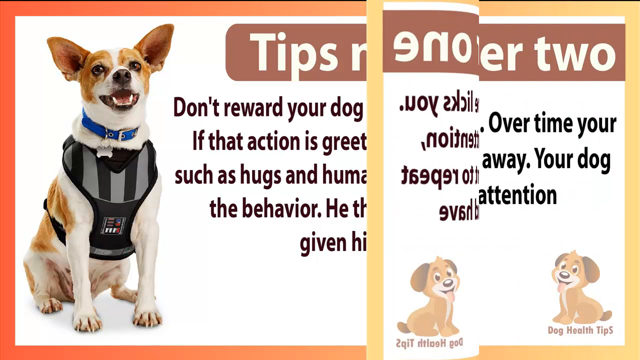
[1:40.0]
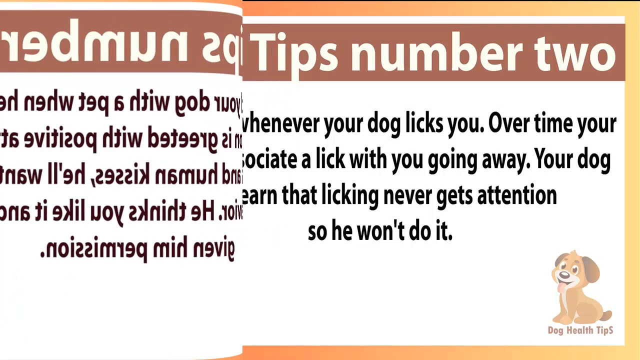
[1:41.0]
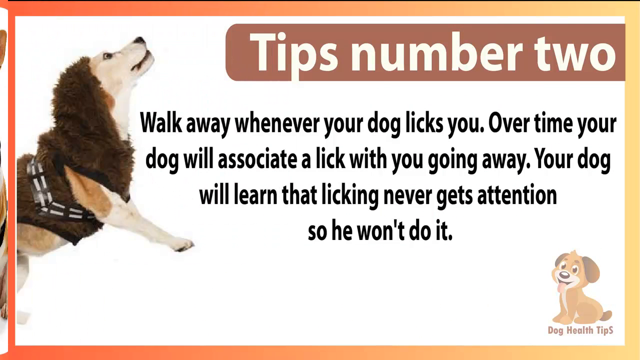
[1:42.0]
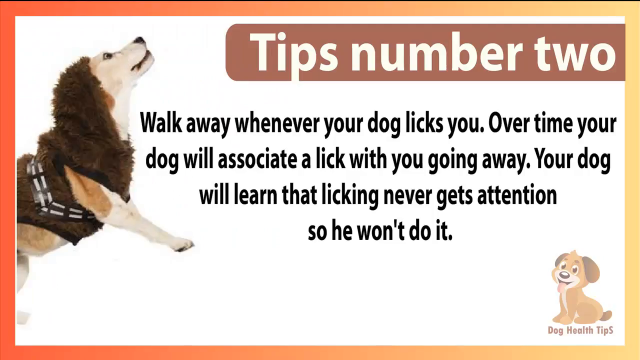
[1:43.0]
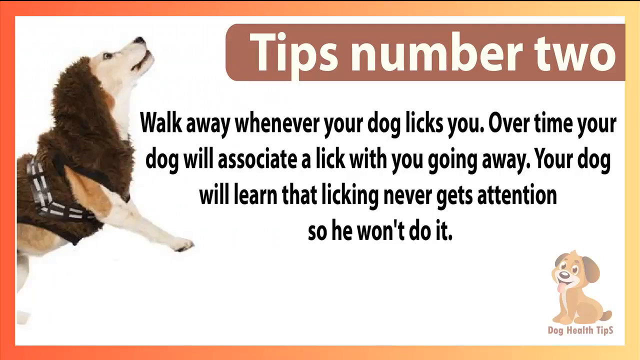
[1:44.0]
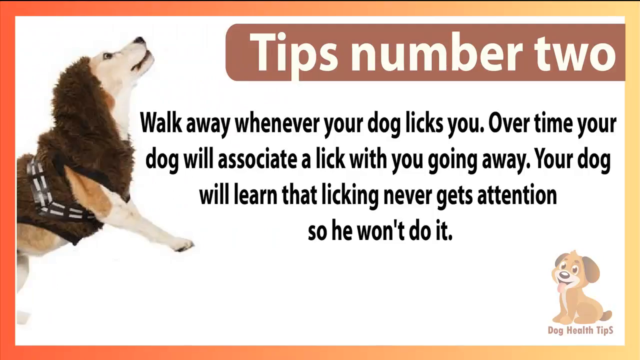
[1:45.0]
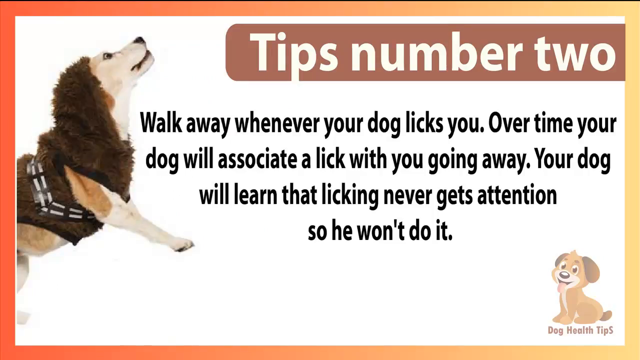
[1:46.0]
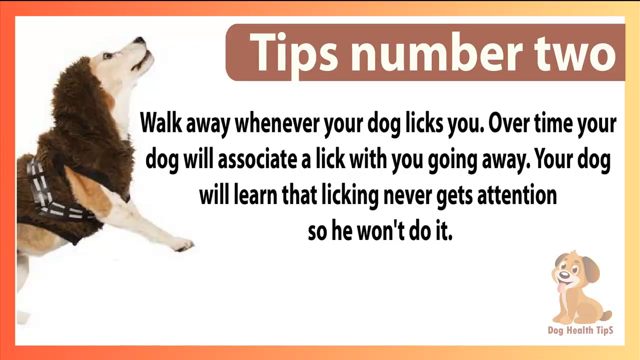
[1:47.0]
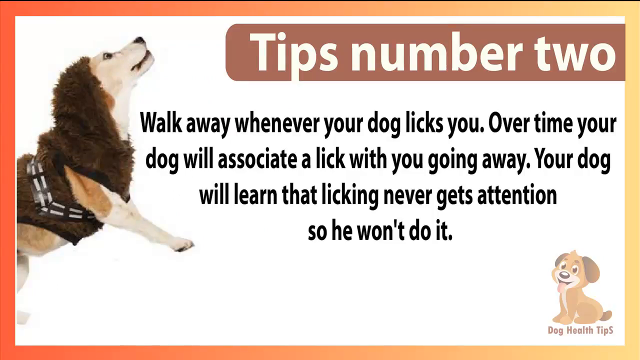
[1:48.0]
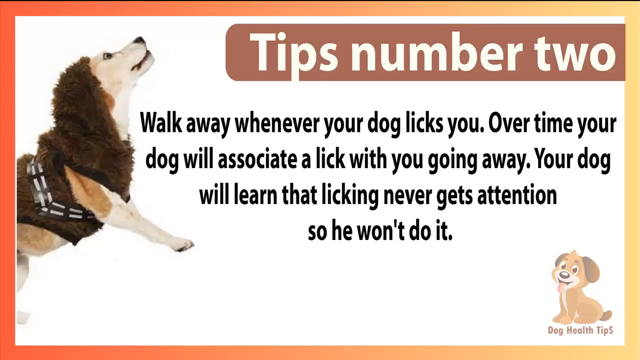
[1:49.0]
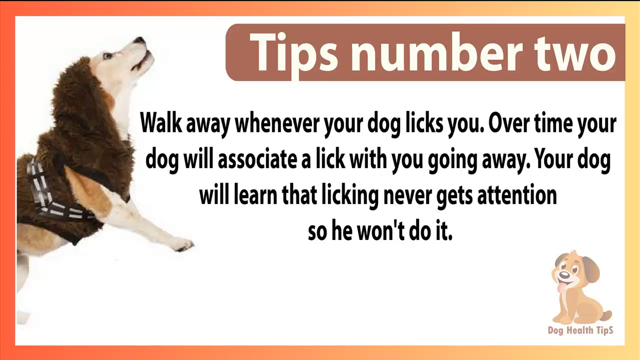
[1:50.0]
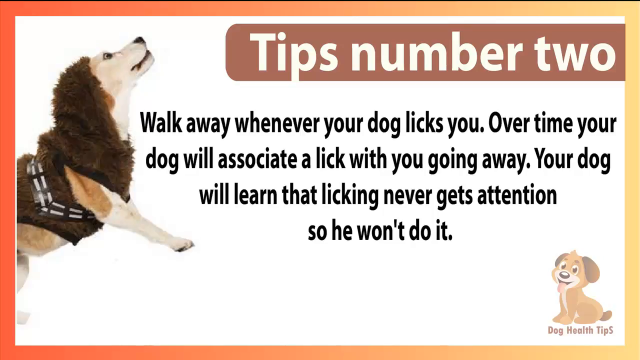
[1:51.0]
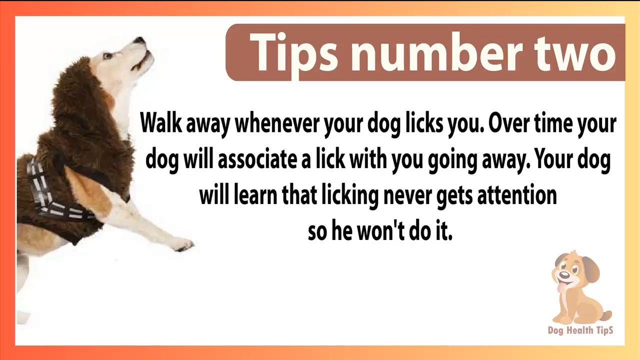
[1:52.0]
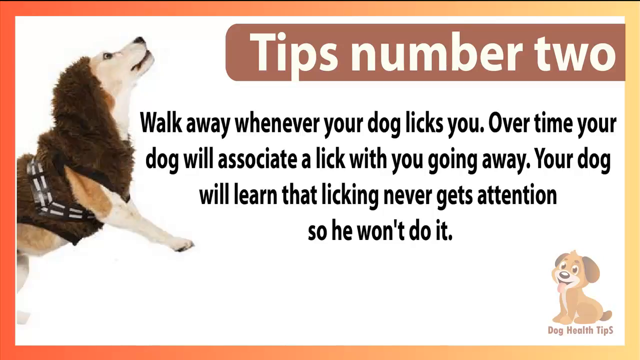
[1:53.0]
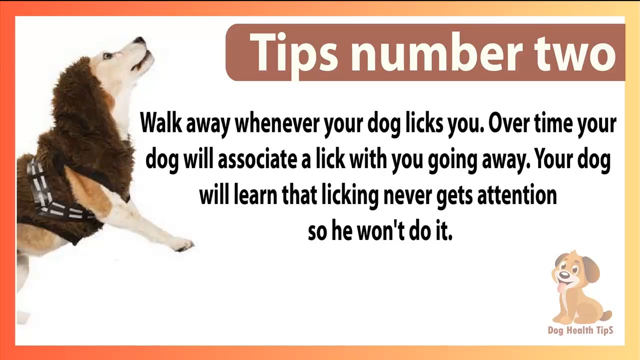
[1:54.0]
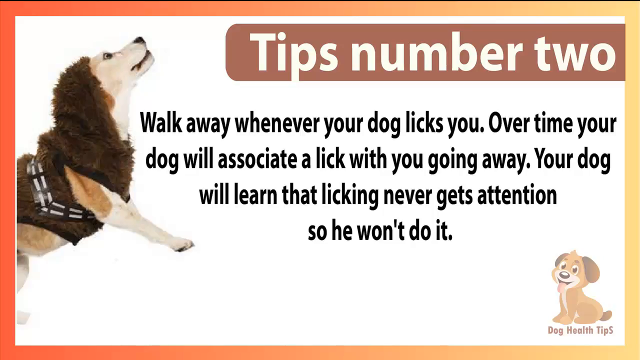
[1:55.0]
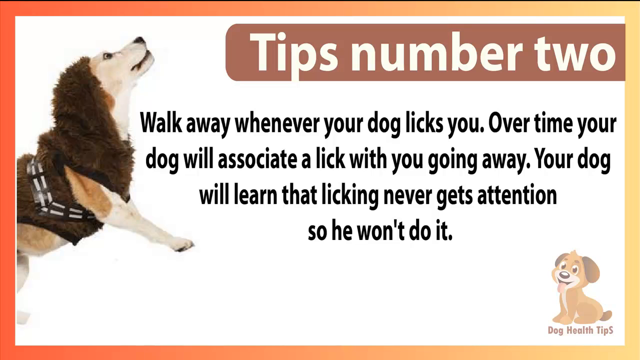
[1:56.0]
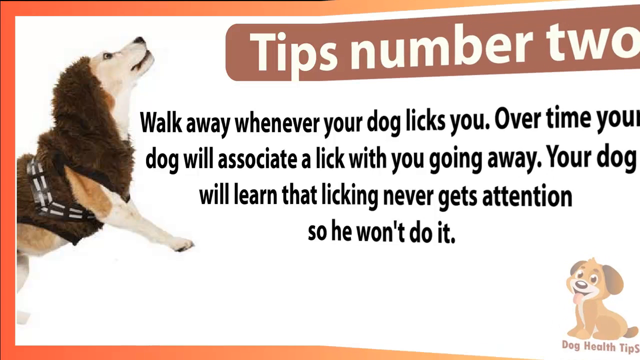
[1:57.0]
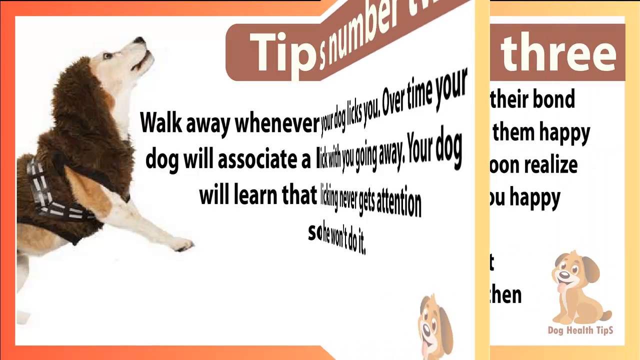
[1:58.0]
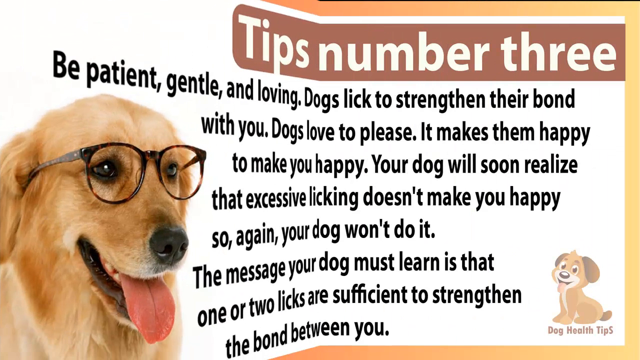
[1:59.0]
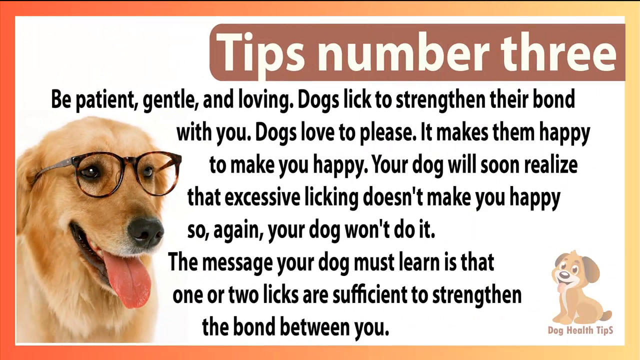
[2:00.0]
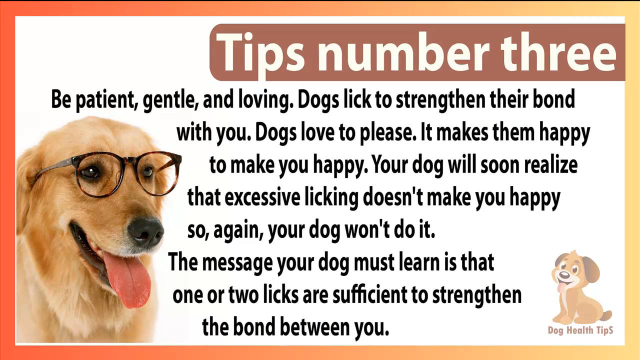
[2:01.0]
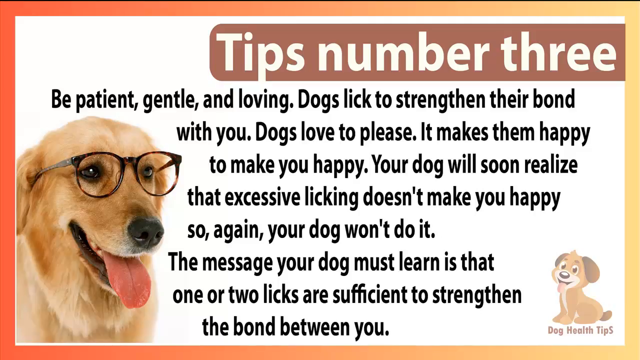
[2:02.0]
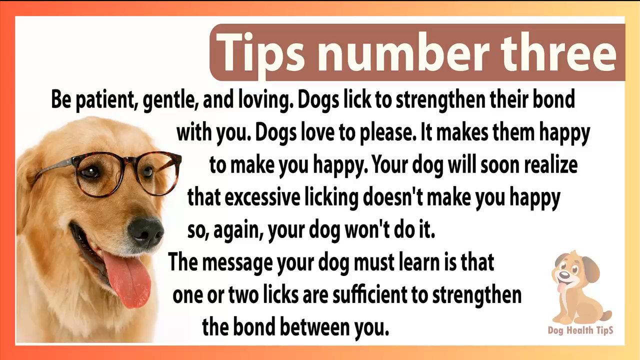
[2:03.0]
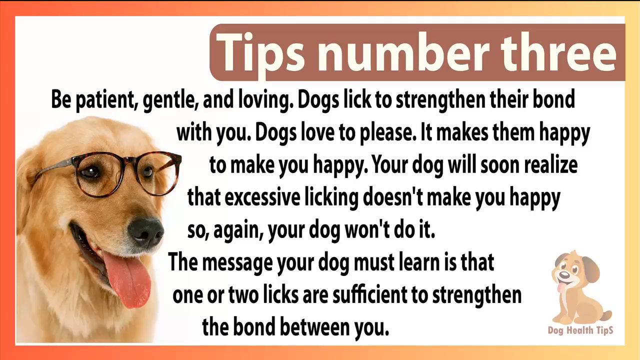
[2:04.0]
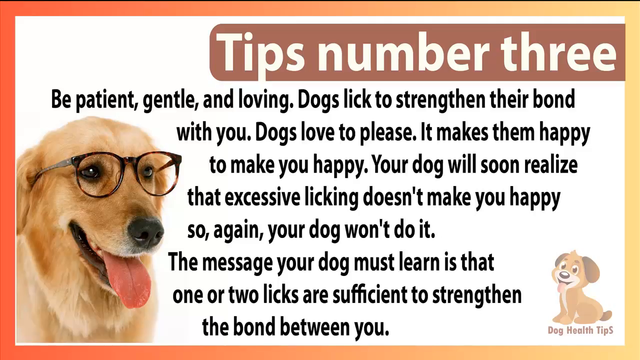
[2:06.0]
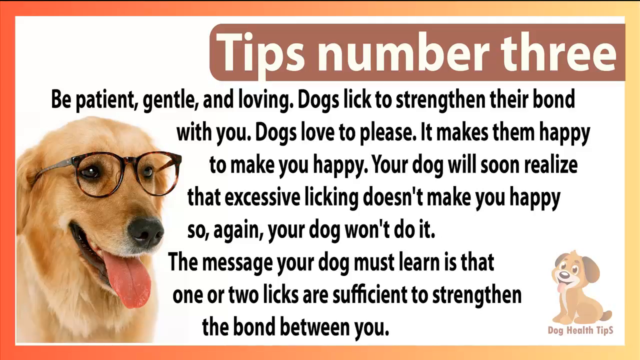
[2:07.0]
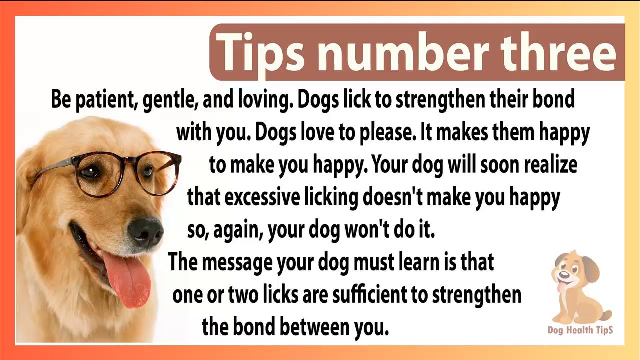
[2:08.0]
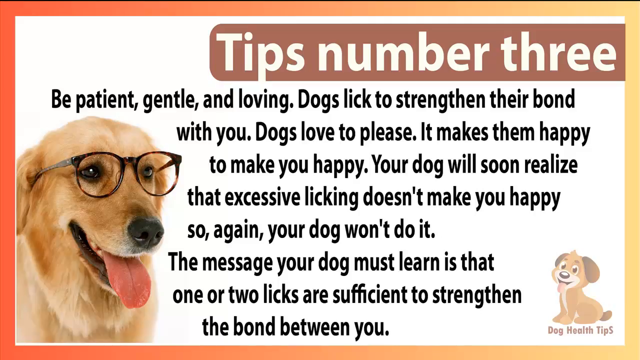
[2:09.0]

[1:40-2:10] The screen rolls to a white background with an image of a dog in the middle to the left of the screen, looking up with his paws raised. A cartoon dog logo is in the bottom right-hand corner. The screen starts off red, ombres into orange and then into yellow, and the bottom of the screen is dark and shadowed. Black text reads: "walk away whenever your dog licks you. Over time your dog will associate a lick with you going away. Your dog will learn that licking never gets attention so he won't do it." At the top is a light brown border with white text reading "tips number two." This then folds over like a page from a book.